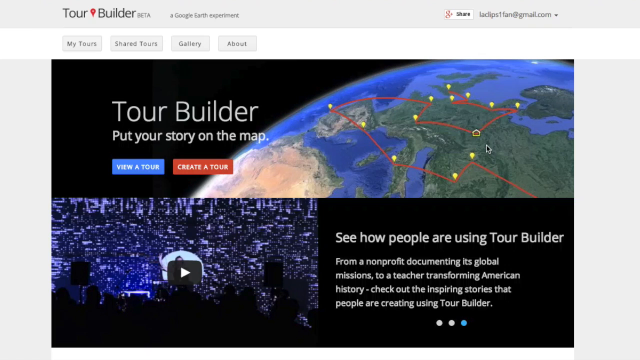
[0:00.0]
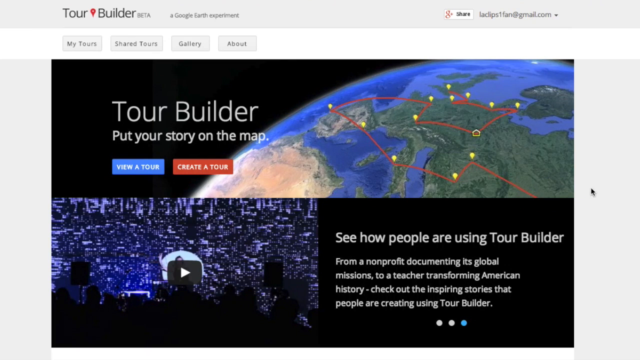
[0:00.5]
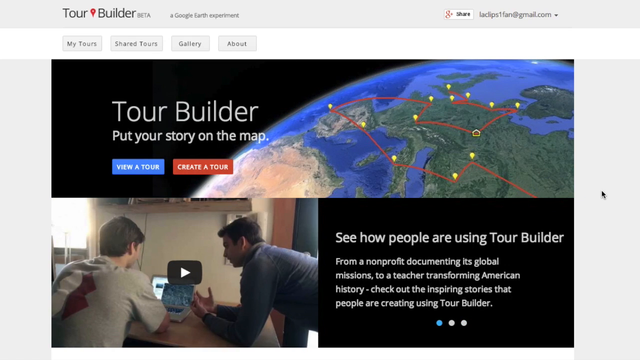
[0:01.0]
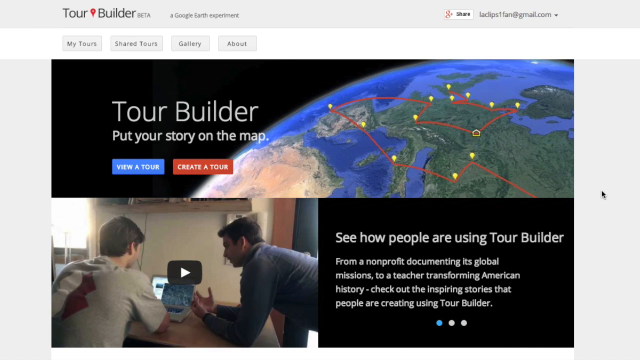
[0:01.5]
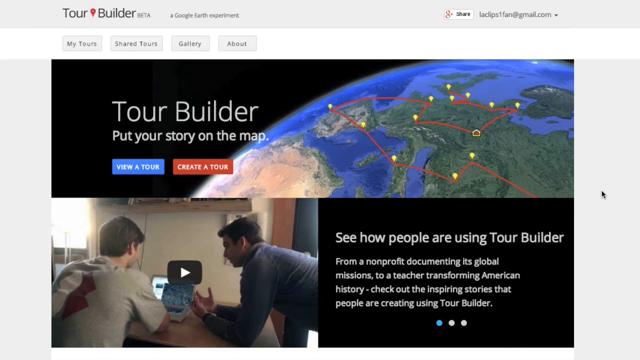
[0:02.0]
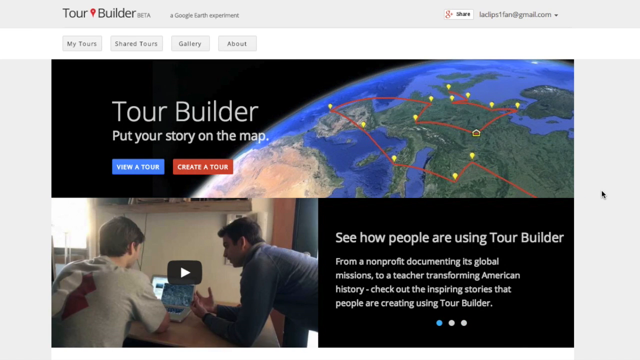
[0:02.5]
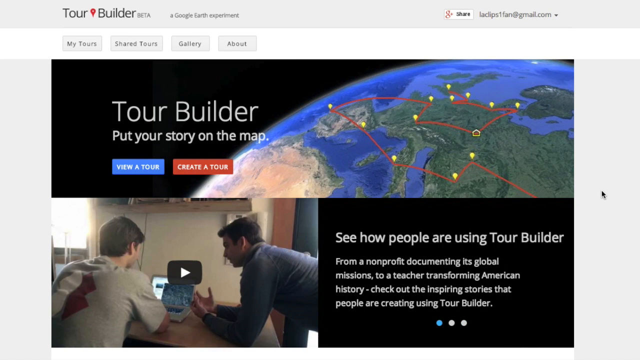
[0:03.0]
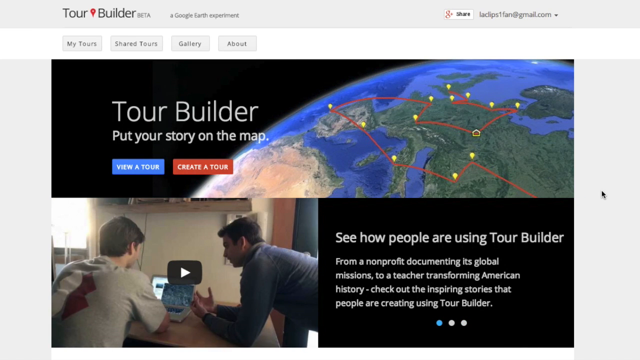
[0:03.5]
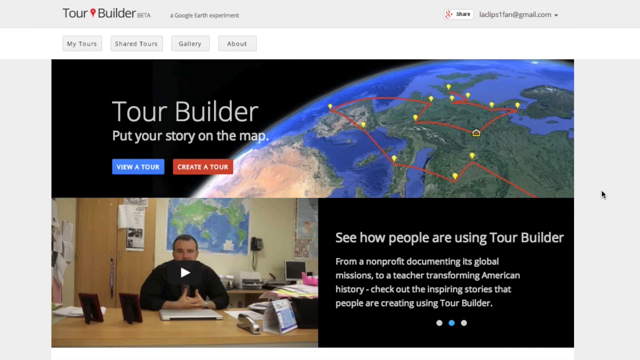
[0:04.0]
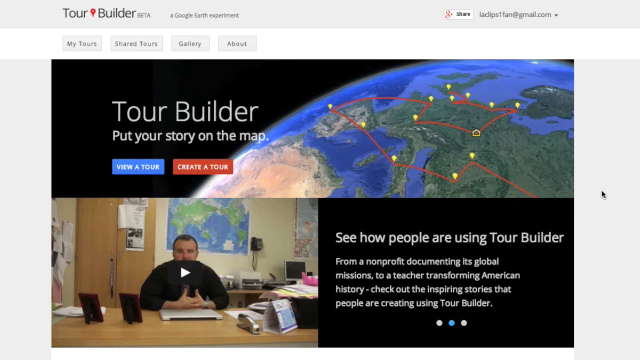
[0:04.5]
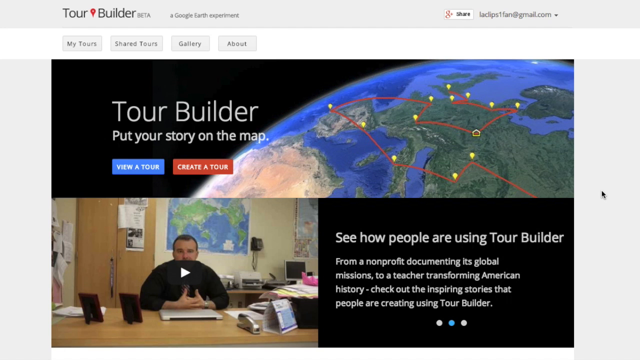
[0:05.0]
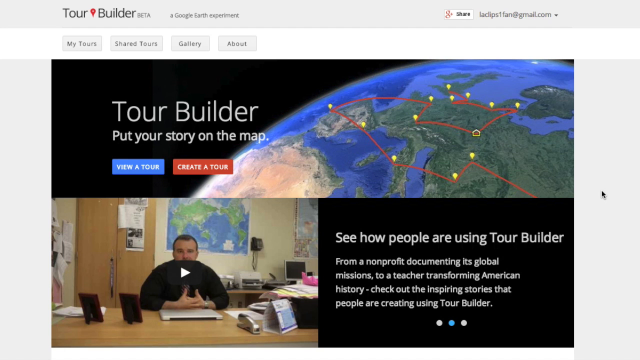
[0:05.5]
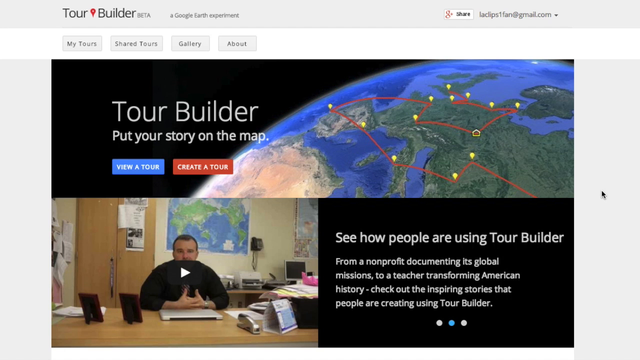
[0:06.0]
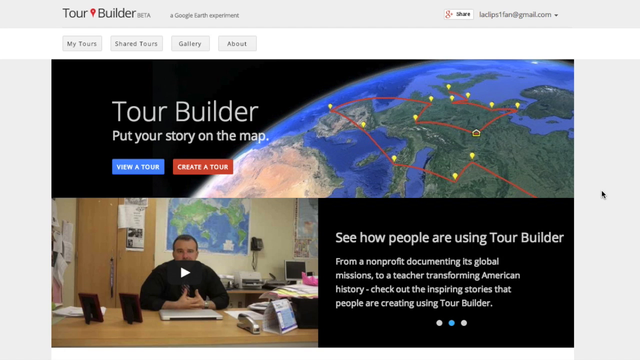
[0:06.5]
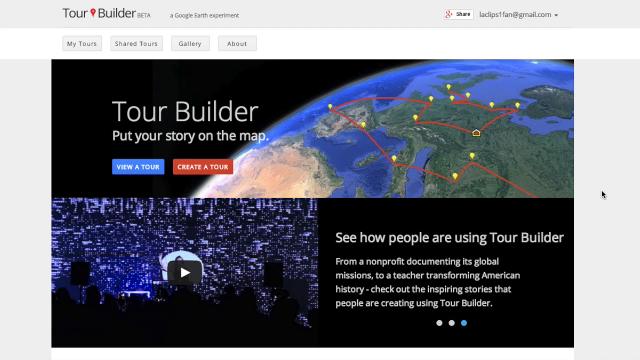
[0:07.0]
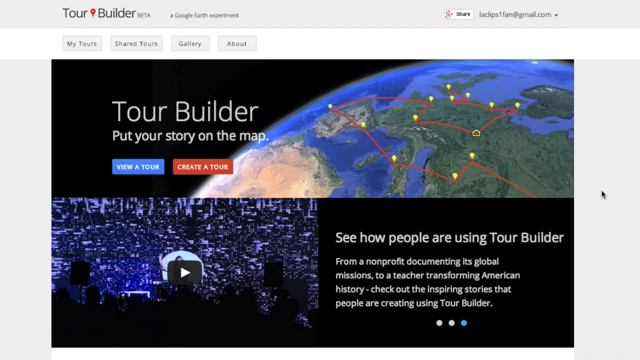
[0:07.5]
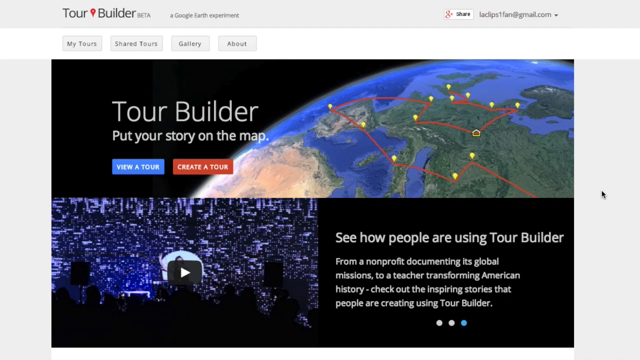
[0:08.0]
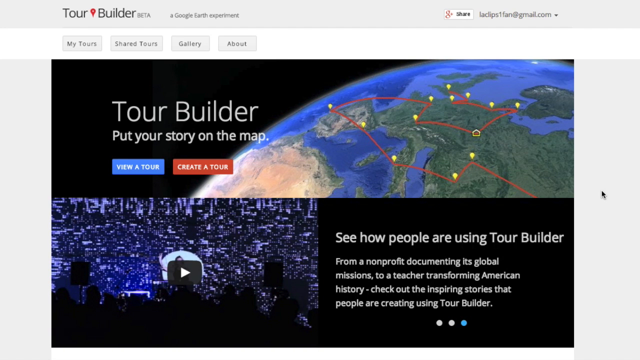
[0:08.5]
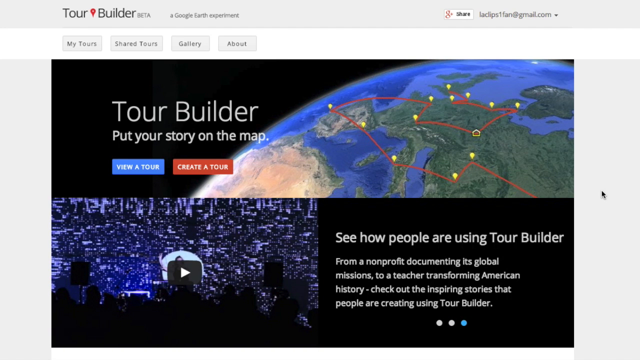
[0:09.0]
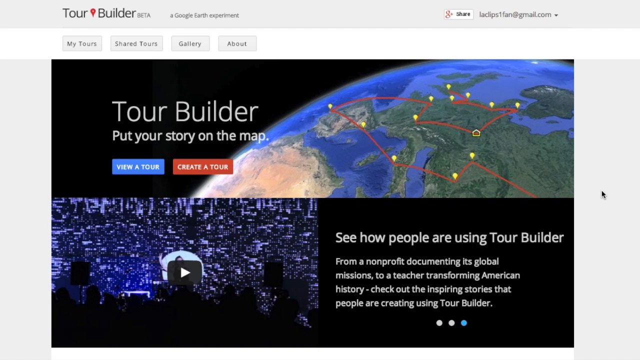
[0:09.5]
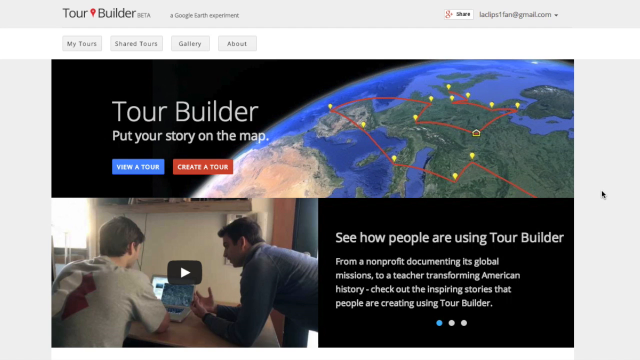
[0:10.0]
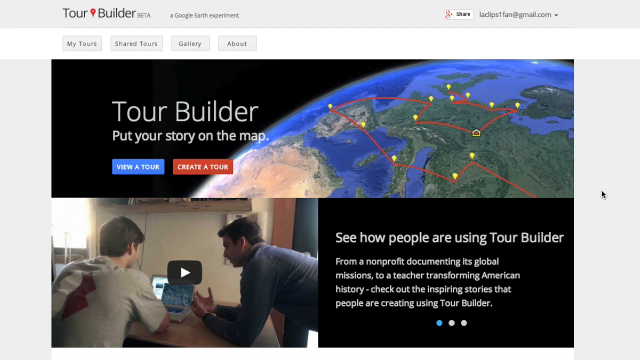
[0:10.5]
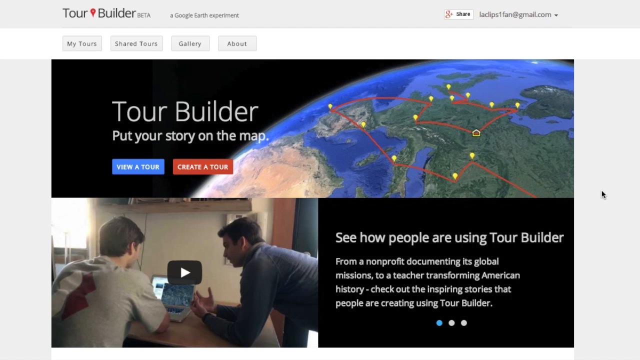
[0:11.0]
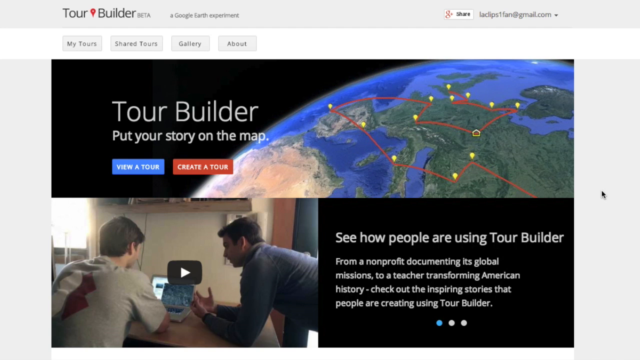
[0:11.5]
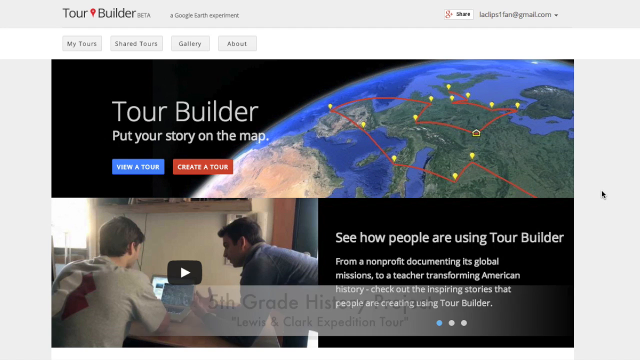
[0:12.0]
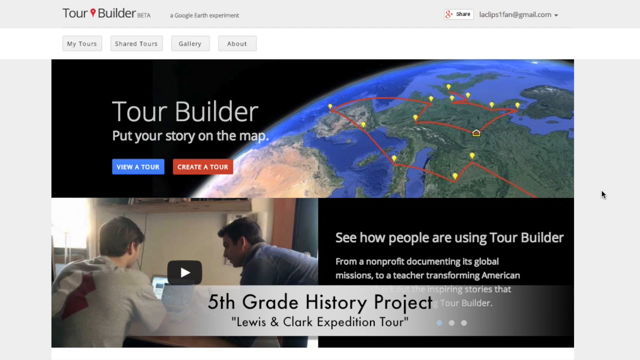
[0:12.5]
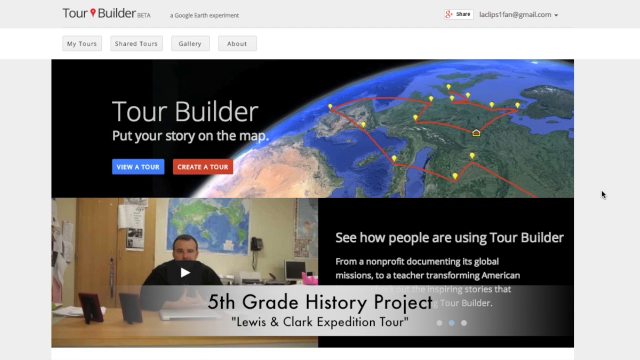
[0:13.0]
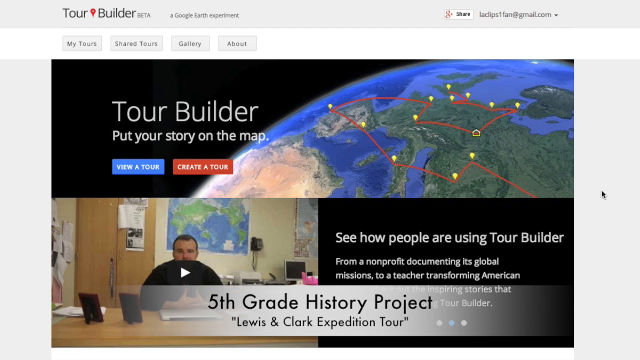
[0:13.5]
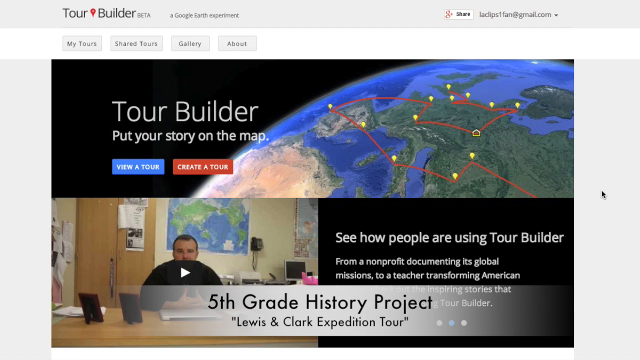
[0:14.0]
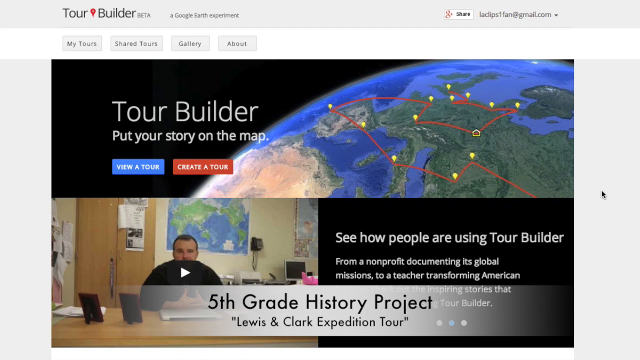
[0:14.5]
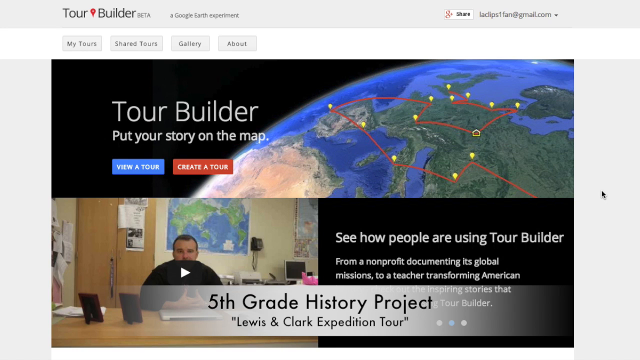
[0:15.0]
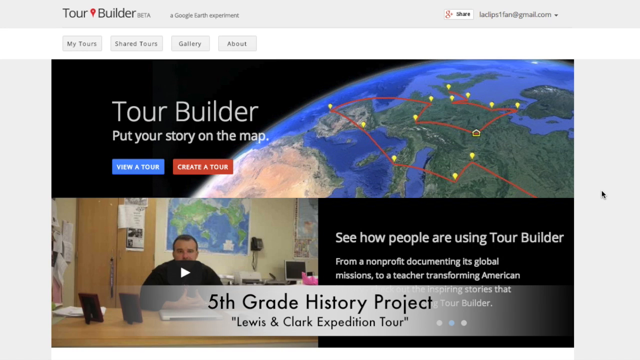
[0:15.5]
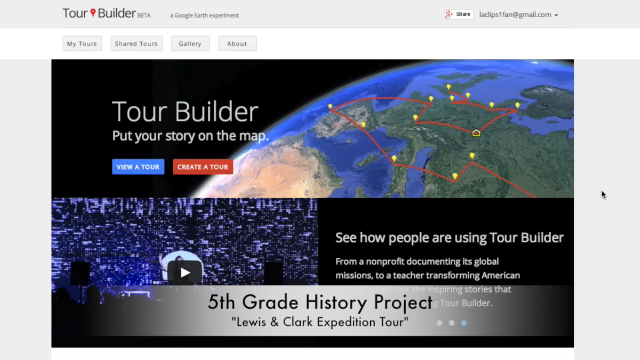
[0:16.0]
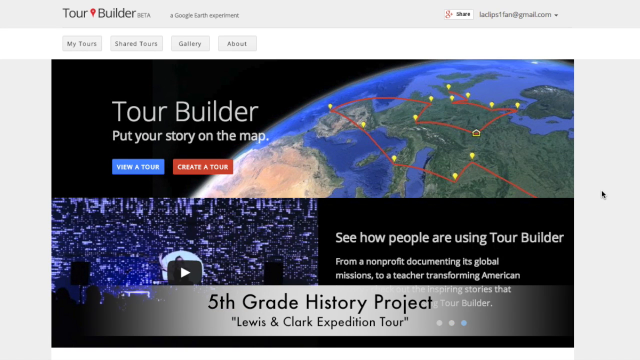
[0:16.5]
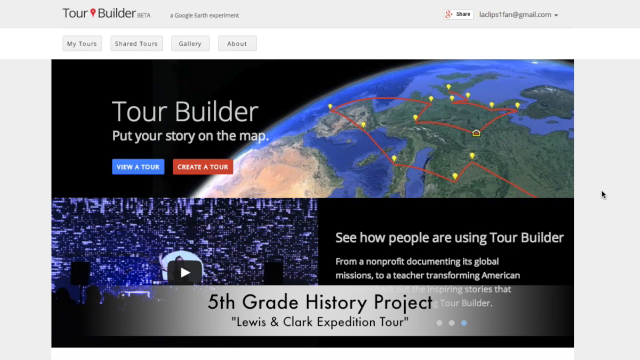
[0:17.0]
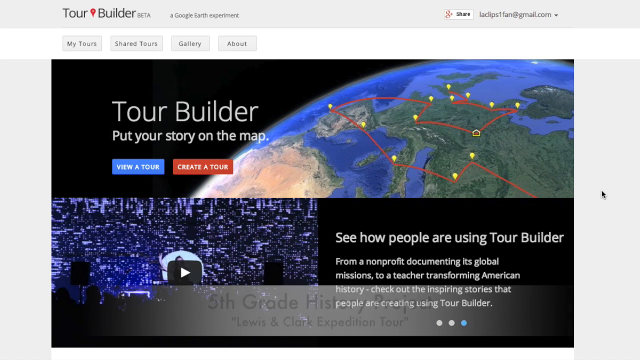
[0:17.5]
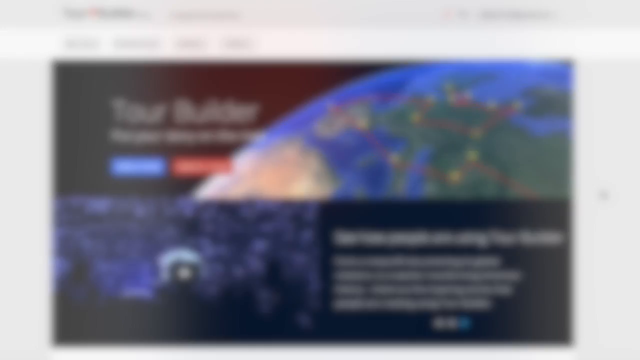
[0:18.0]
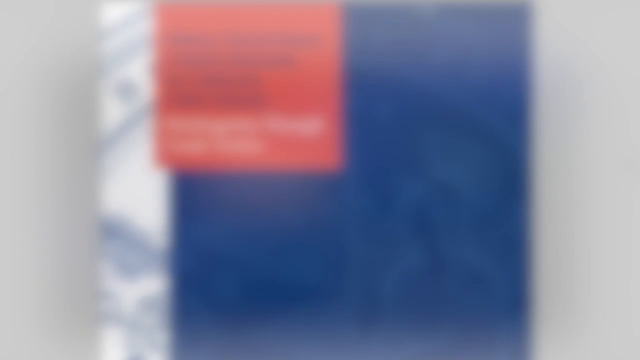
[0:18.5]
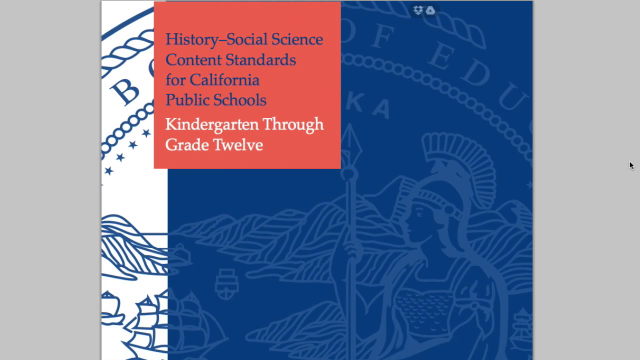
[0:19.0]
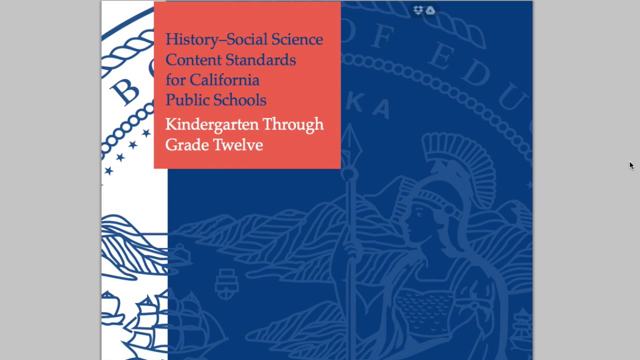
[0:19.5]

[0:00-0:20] A website called Tour Builder is displayed. At the top it says "a Google Earth experiment," and at the top right there is a Google Plus share account with an email that seems to read "laclips1fan@gmail.com". Below are four small subsections: "My Tours," "Share Tours," "Gallery" and "About." The main picture area reads "Tour Builder, put your story on the map," with a blue "view tour" button and a red "create a tour" button below. The picture shows Europe with sort of yellow points marking where people went and a path following their route. Below that, two men are looking at a screen; one man on the left is focusing on the screen while the other is sort of leaning over from a table. To the right, text reads "see how people are using Tour Builder, from a non-profit documenting its global missions to a teacher transforming American history. Check out the inspiring stories that people are creating using Tour Builder." The picture slides over to show the teacher, then shows a space globe inside a black room, and text appears at the bottom reading "fifth grade history project Lewis and Clark expedition tour." A sort of fade transition leads to a cover page.